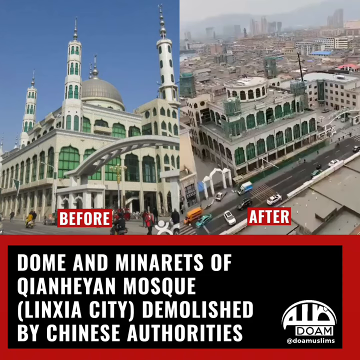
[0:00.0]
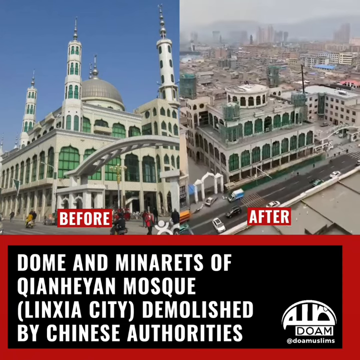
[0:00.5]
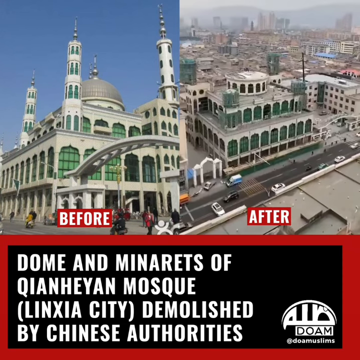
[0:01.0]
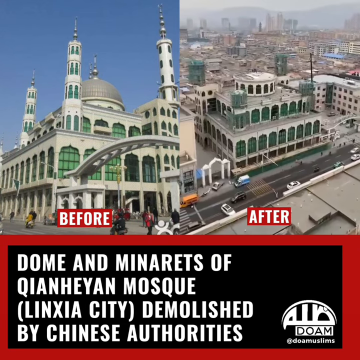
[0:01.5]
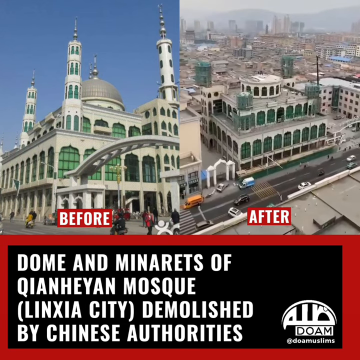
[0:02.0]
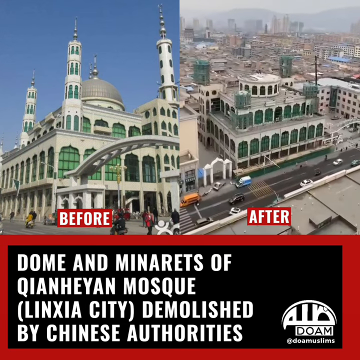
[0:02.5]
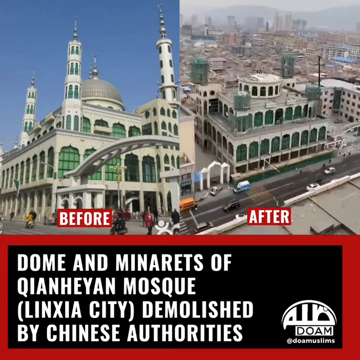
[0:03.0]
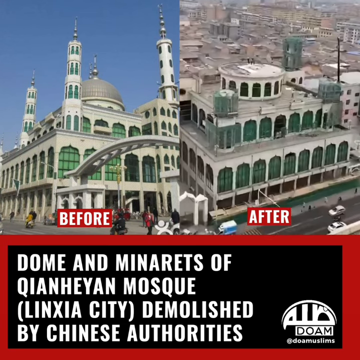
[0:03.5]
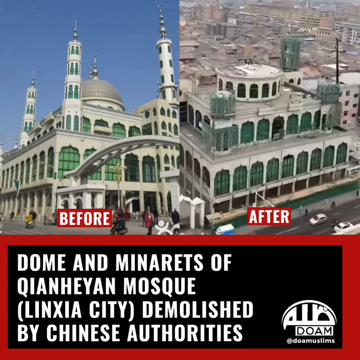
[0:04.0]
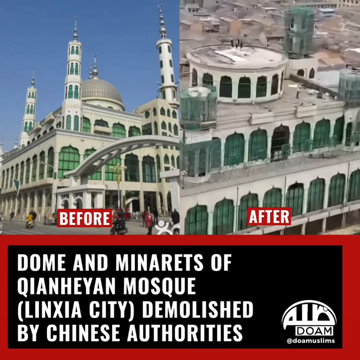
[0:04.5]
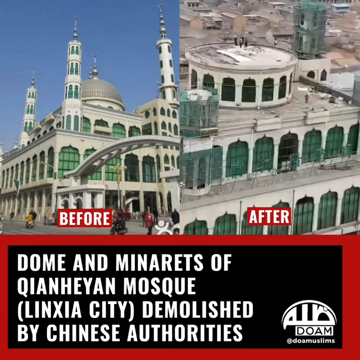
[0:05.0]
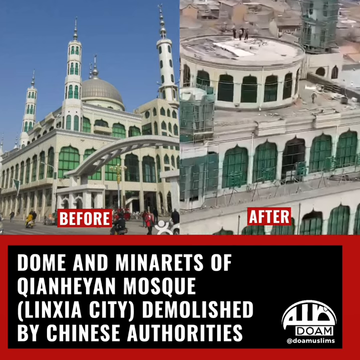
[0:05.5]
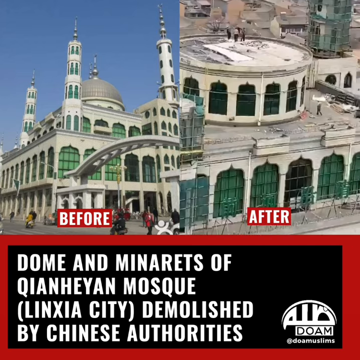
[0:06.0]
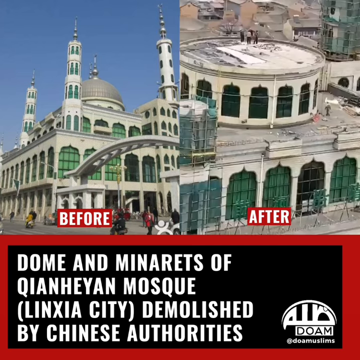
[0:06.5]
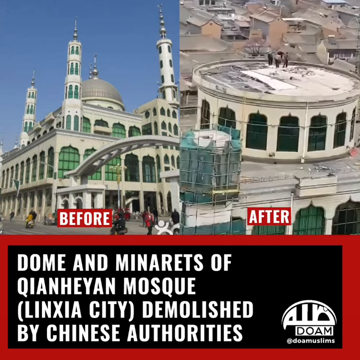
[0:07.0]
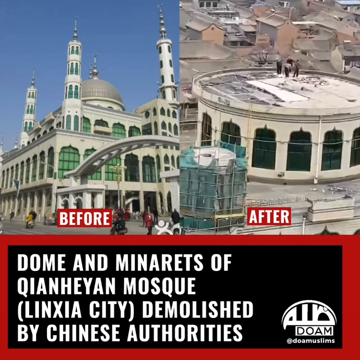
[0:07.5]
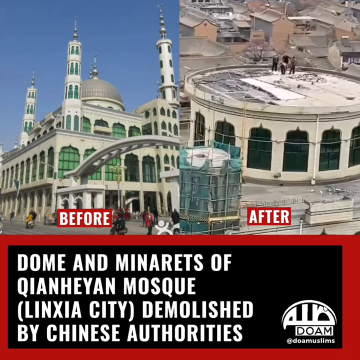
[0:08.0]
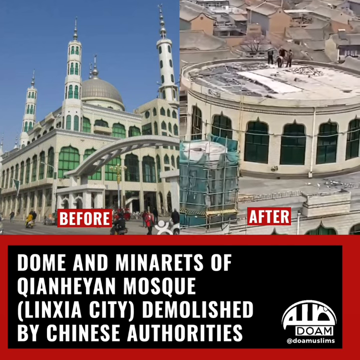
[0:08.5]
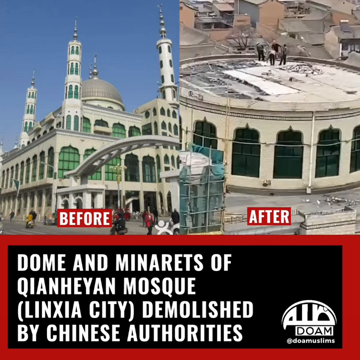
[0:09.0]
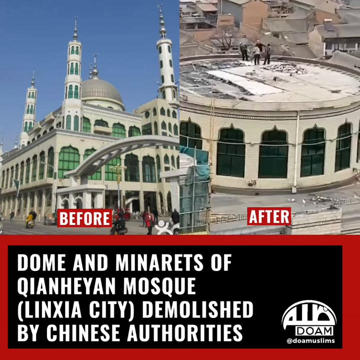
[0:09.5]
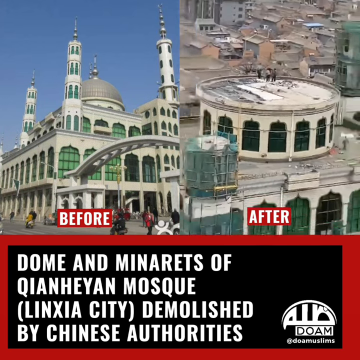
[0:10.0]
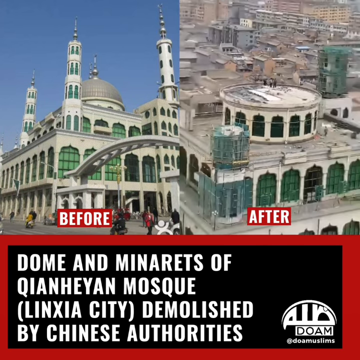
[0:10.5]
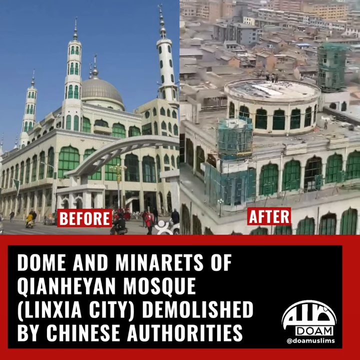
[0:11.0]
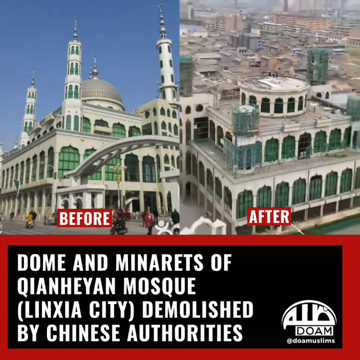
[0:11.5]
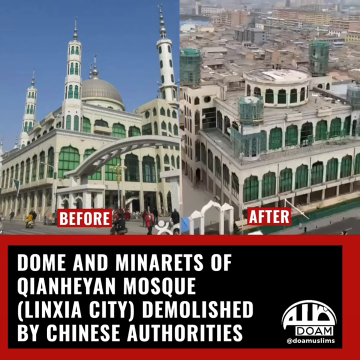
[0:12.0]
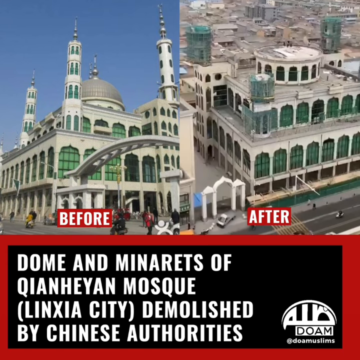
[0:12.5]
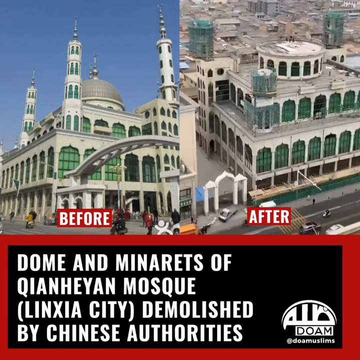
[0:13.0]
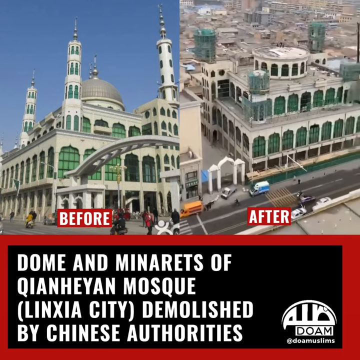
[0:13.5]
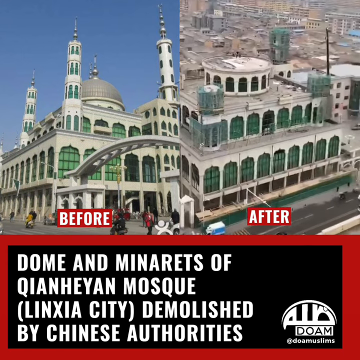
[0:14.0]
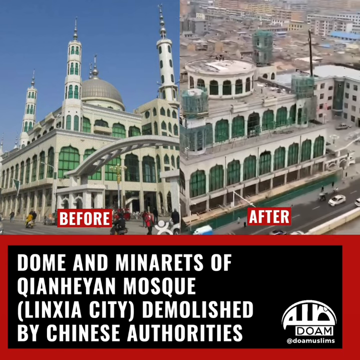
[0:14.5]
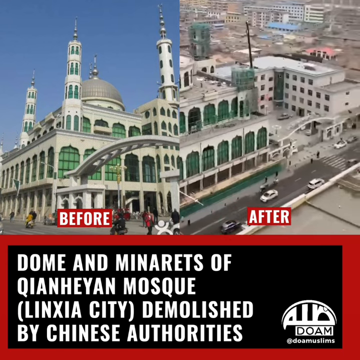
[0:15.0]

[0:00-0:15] The video is made up of three sections. In the upper left is an image of a white mosque with green windows in an urban center. To the right of it is the same mosque seen from an overhead position, with the dome and minarets removed. At the bottom, below the two images, there is a red box; within it is a black box containing white text that reads "DOME AND MINARETS OF QIANHEYAN MOSQUE (LINXIA CITY) DEMOLISHED BY CHINESE AUTHORITIES." To the right of that text is a white symbol, below which black text reads "DOAM," and below that white text reads "@doamuslims." The upper-left section is a still image, while the upper-right section is not static: it is a recording that zooms in towards the mosque from a position above and across from it. A person walks on the right side of the mosque's roof, and the places where work was done on the mosque to remove the minarets and dome are visible.